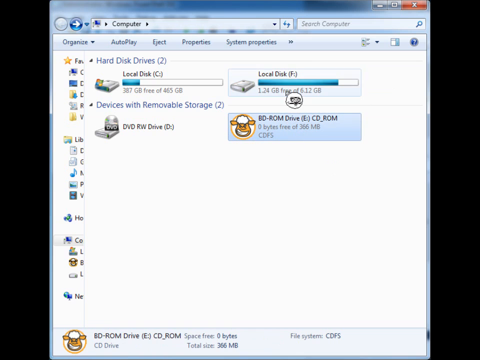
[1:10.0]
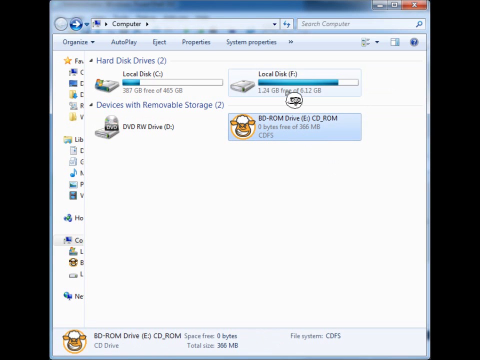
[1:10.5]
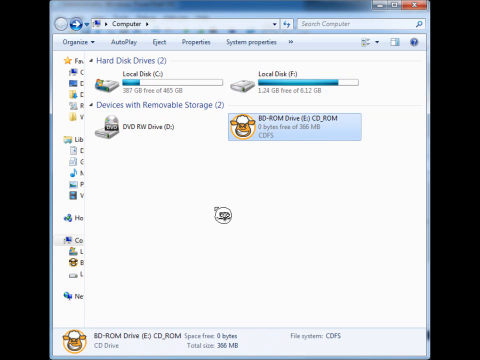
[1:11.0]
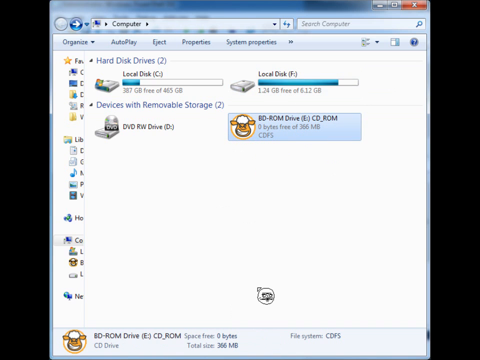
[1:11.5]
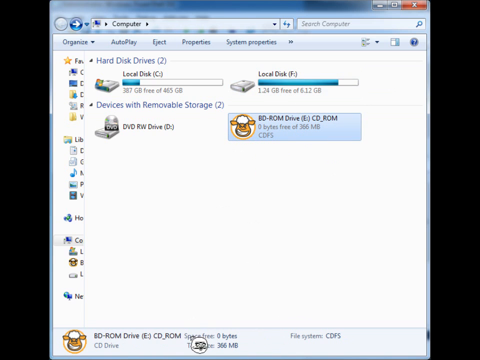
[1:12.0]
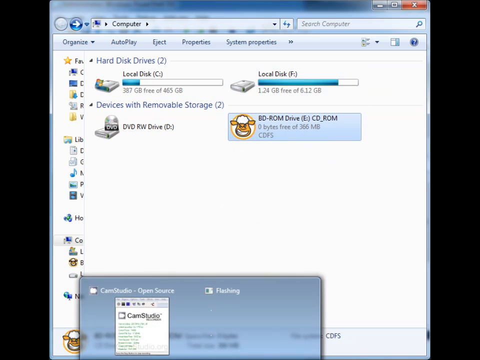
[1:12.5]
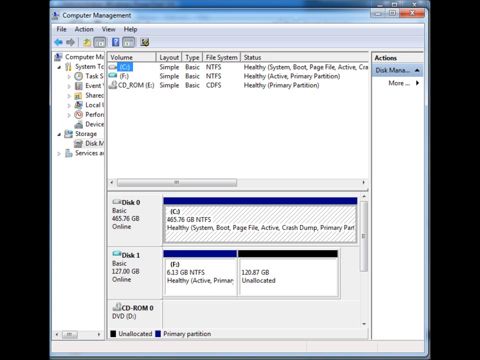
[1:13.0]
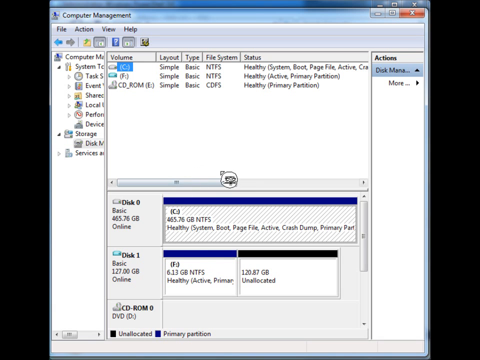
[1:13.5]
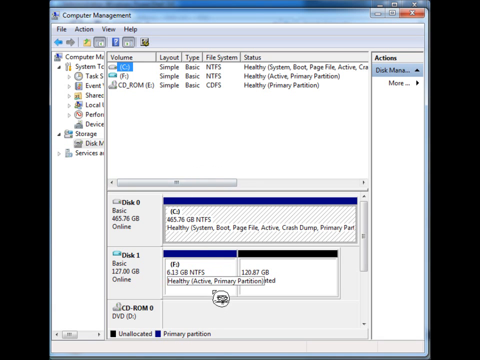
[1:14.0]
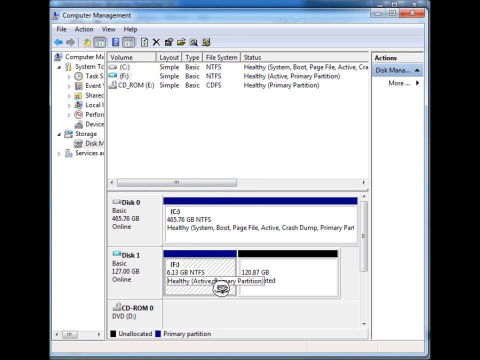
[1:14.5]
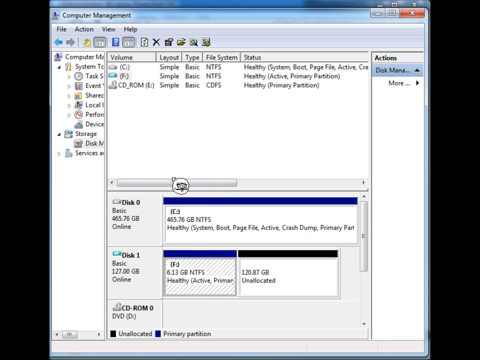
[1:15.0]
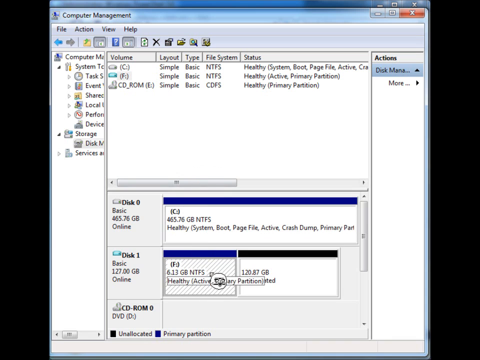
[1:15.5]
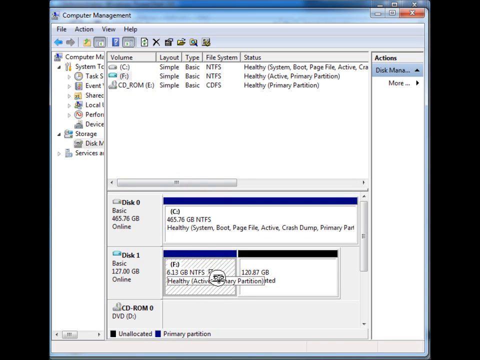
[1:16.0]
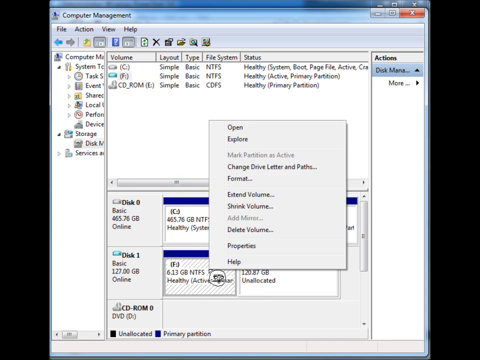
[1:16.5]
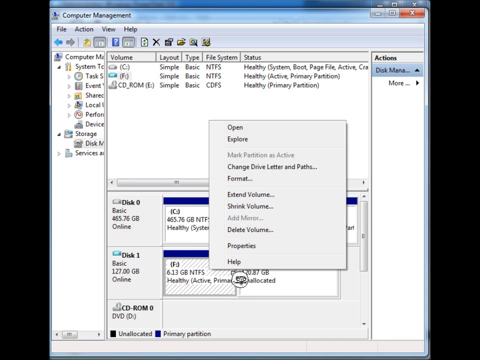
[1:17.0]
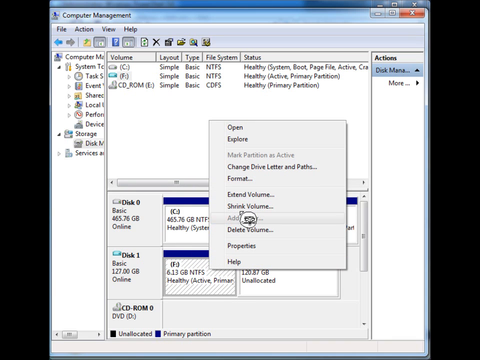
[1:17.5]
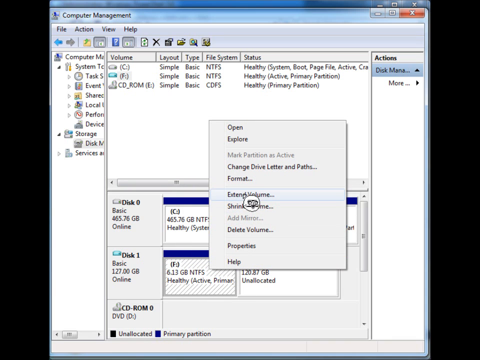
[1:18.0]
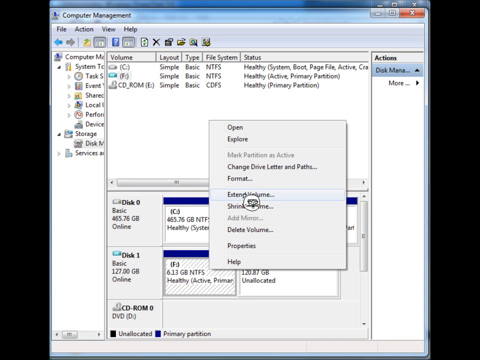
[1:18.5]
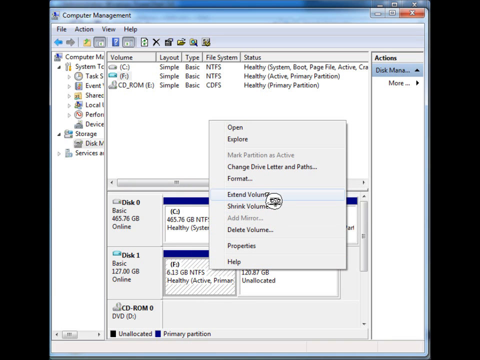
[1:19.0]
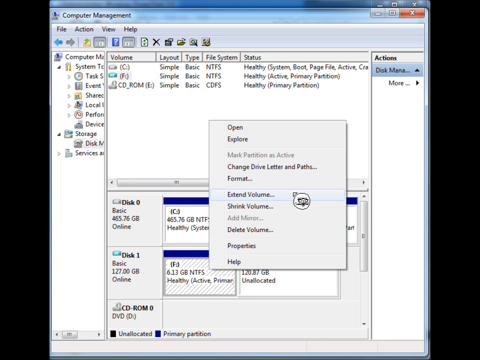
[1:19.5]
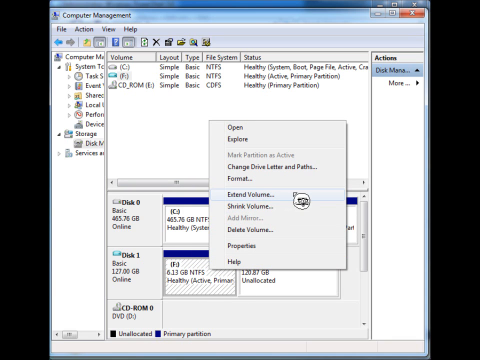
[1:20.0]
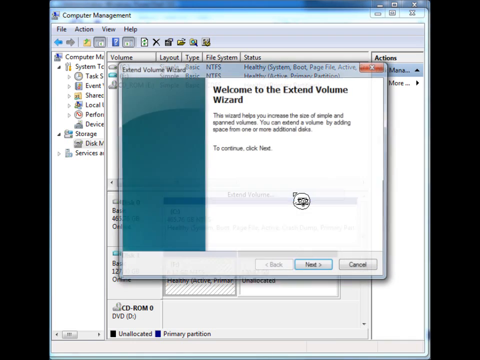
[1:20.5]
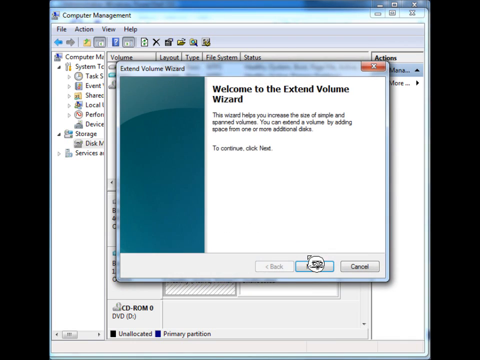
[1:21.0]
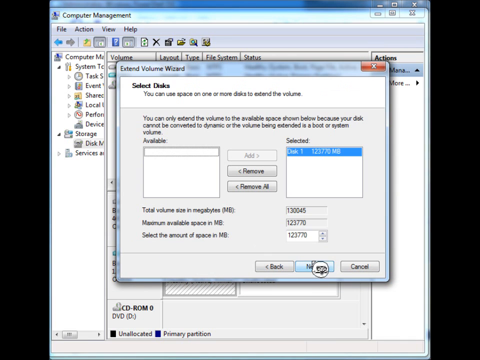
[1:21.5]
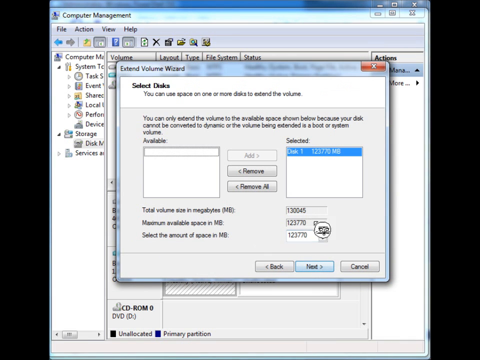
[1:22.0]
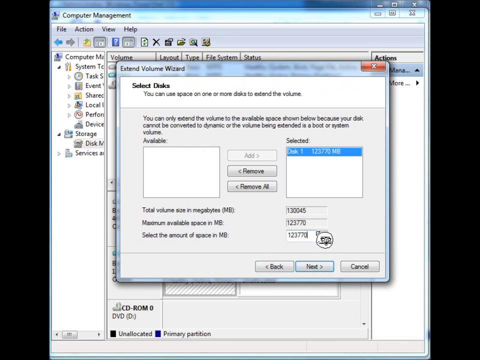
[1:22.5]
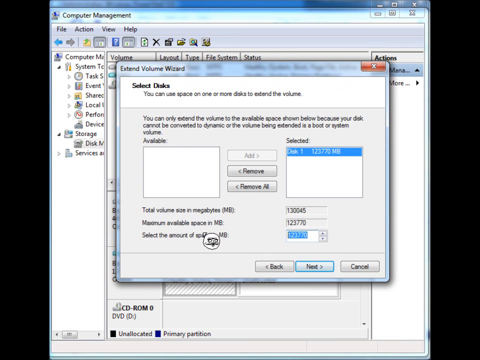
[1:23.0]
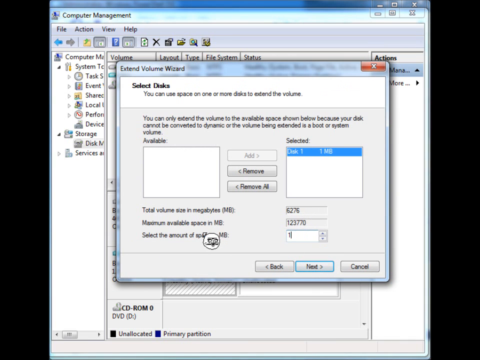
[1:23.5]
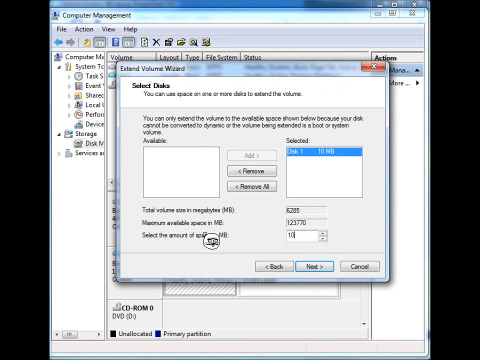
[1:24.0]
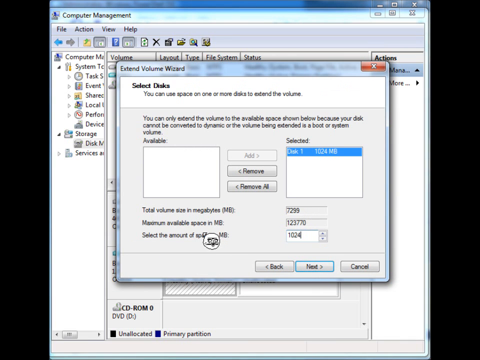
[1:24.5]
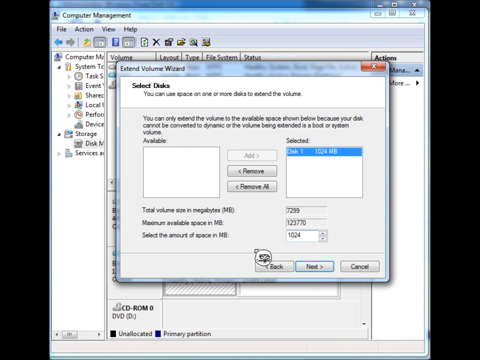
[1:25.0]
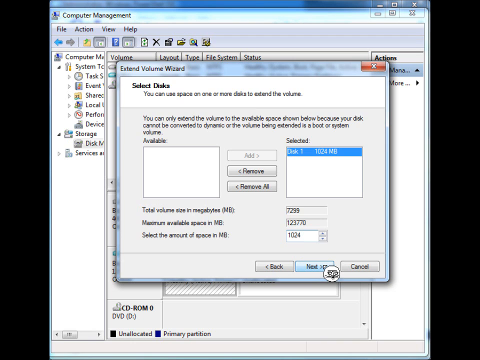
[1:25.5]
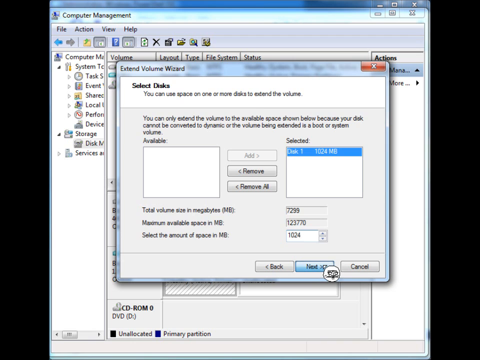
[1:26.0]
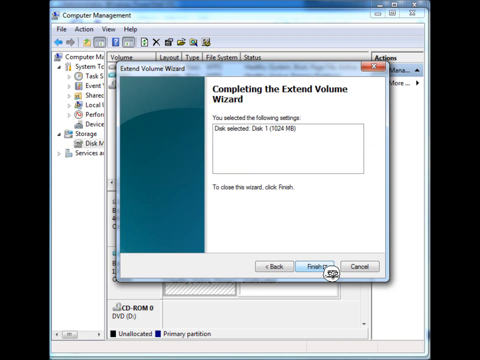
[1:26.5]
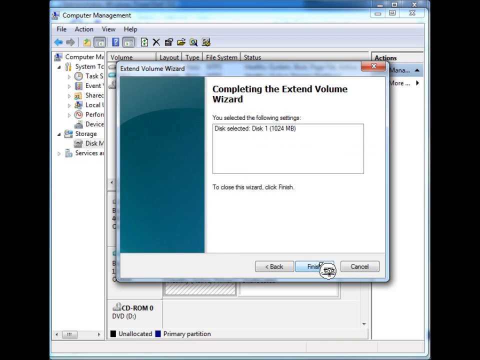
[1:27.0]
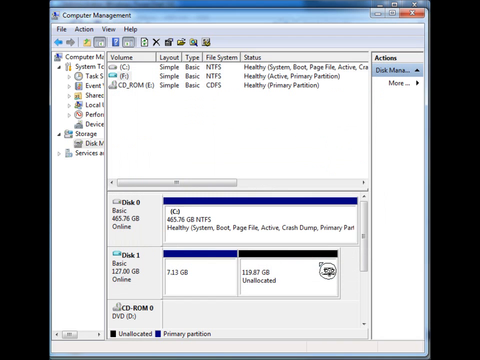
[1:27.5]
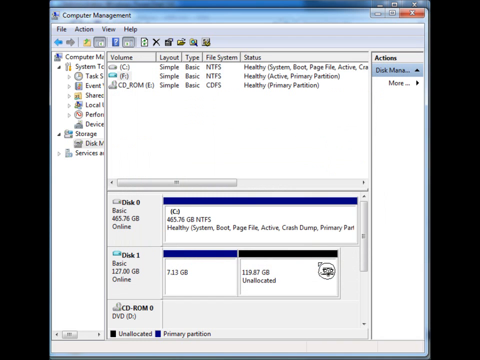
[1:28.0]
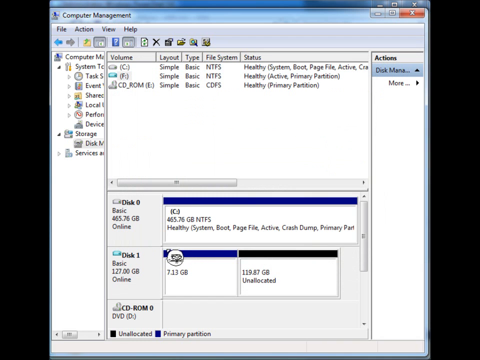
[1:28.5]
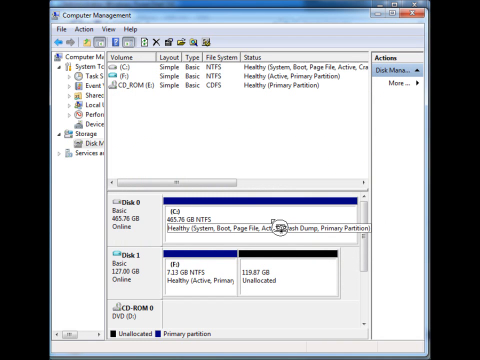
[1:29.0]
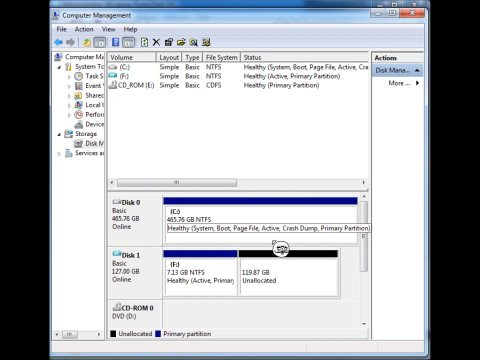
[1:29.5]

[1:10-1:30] A window shows the storage devices connected to a computer. After a button is clicked, a computer management window appears with the drives in a smaller, multi-column list. From left to right, the column headings are volume, layout, type, file system, and status. The C drive is simple layout, basic type, NTFS file system, with status healthy, system, boot. The F drive is simple layout, basic type, NTFS file system, with status healthy, active, primary partition. The CD-ROM drive is simple layout, basic type, CDFS file system, healthy, primary partition. The lower half of the window shows a graphical representation of the disk formatting: disk 0, apparently the basic container, disk 1, and the CD-ROM. The cursor clicks on the disk 1 partition, apparently the active primary partition, and apparently right-clicks, bringing up a menu with open, explore, mark partition as active (grayed out), change drive letter and paths, format, extend volume, shrink volume, add mirror (grayed out), delete volume, properties, and help. Extend volume is selected, bringing up the welcome to the extend volume wizard window, with text stating that the wizard helps increase the size of simple volumes, along with other text that is hard to read. The user clicks through and selects an amount of space to expand the volume.